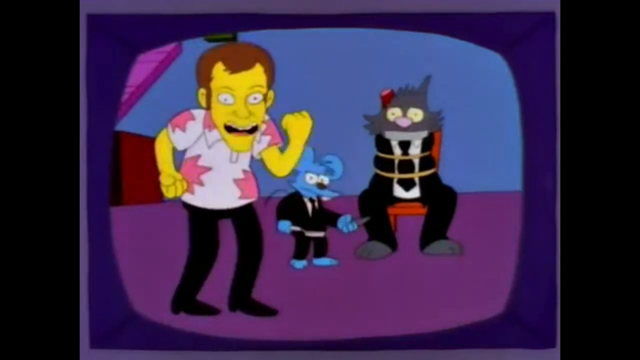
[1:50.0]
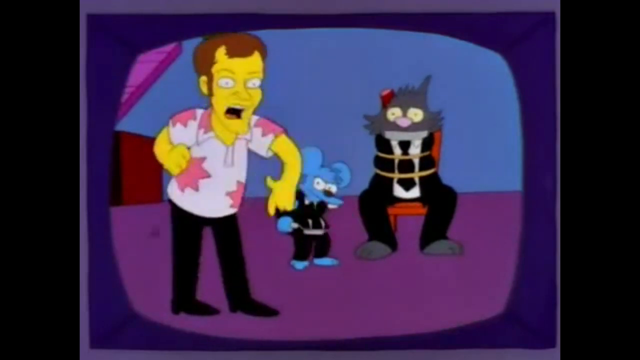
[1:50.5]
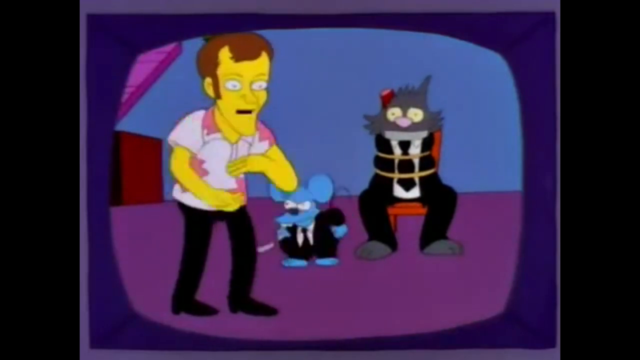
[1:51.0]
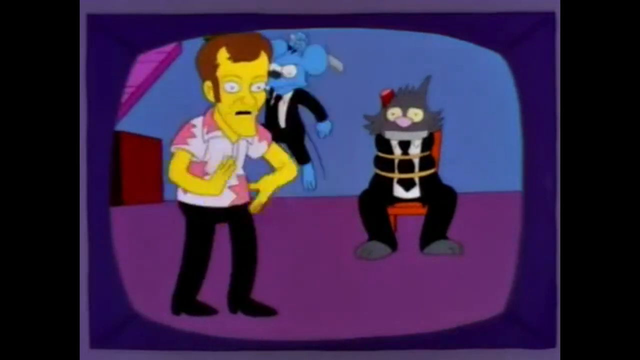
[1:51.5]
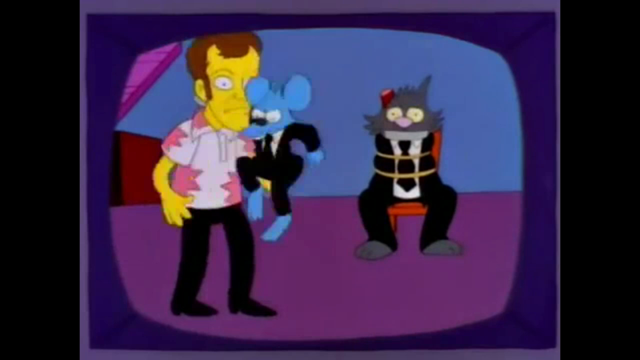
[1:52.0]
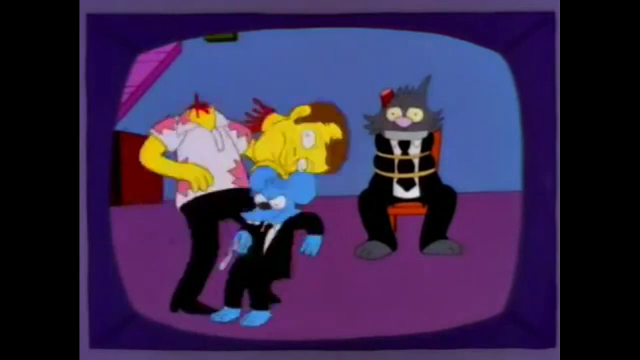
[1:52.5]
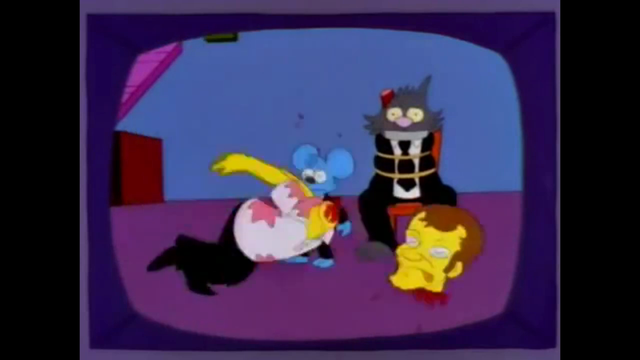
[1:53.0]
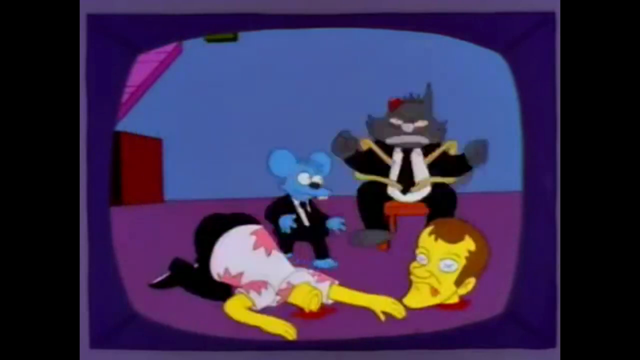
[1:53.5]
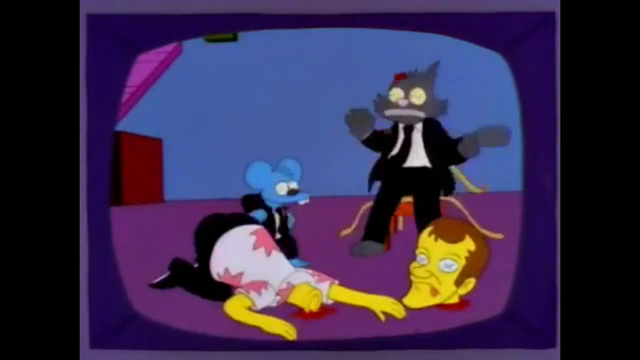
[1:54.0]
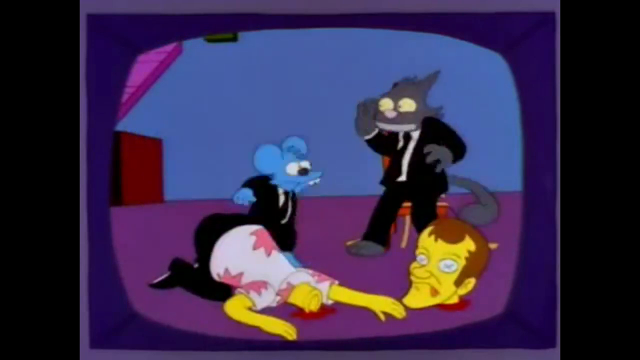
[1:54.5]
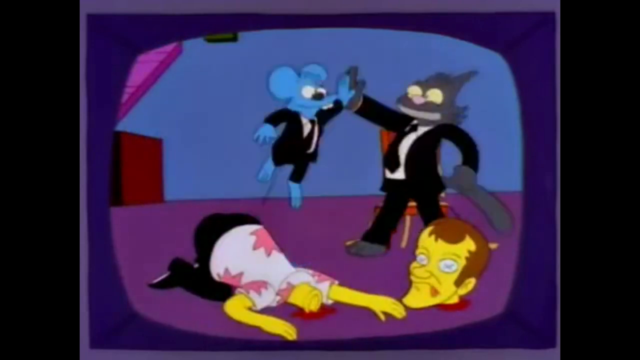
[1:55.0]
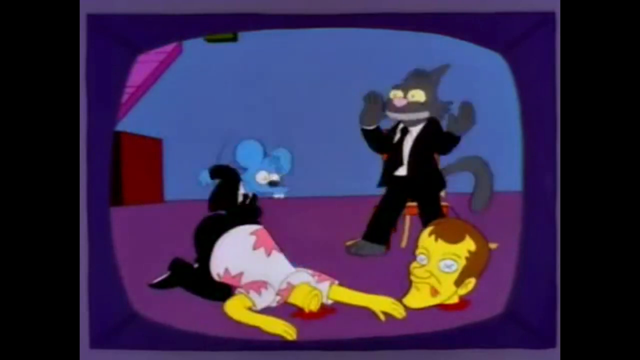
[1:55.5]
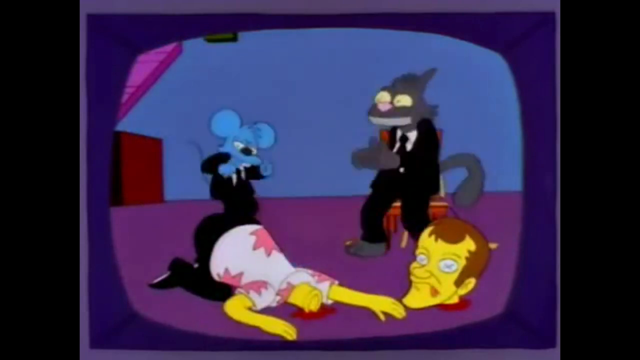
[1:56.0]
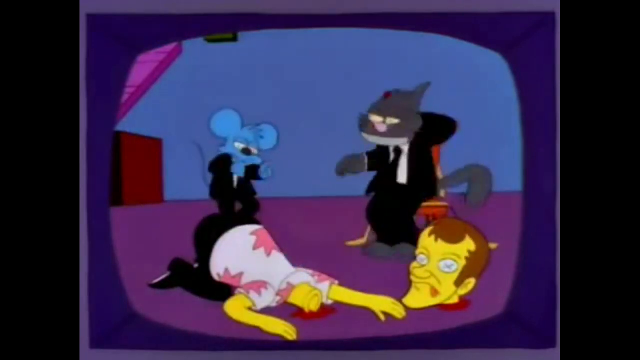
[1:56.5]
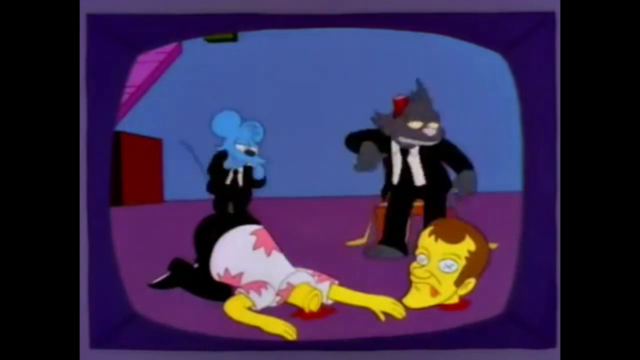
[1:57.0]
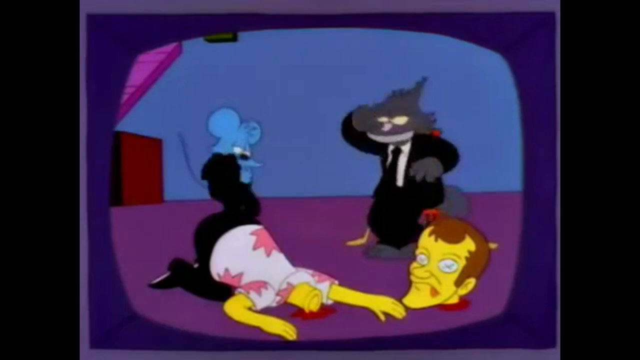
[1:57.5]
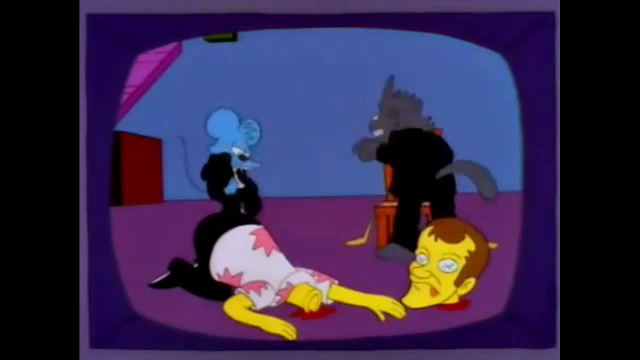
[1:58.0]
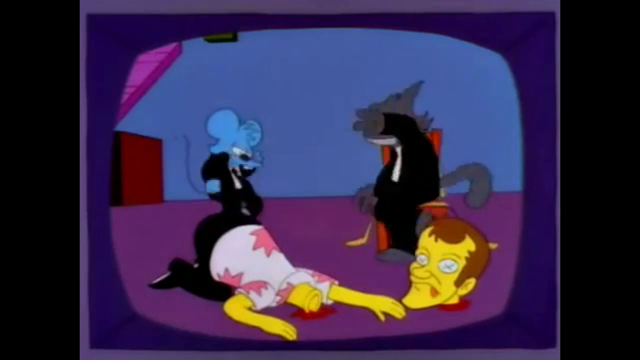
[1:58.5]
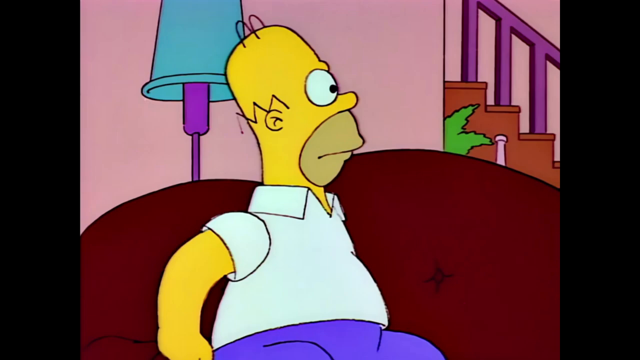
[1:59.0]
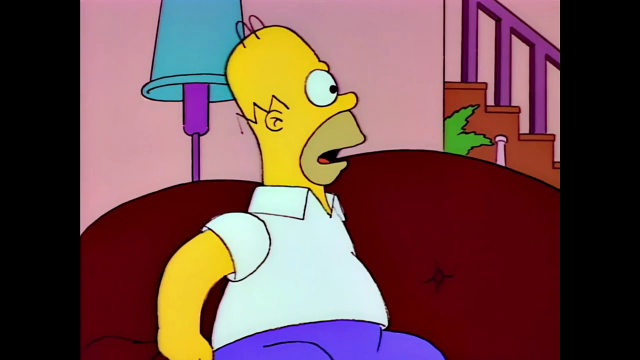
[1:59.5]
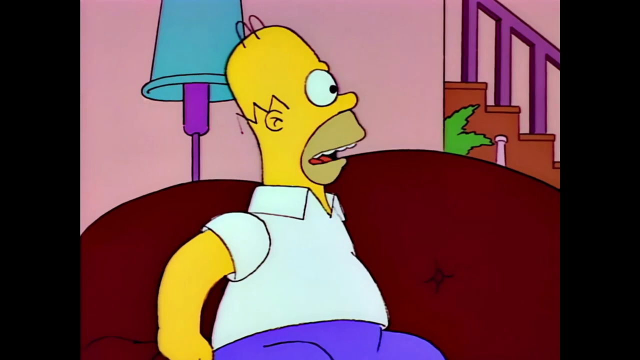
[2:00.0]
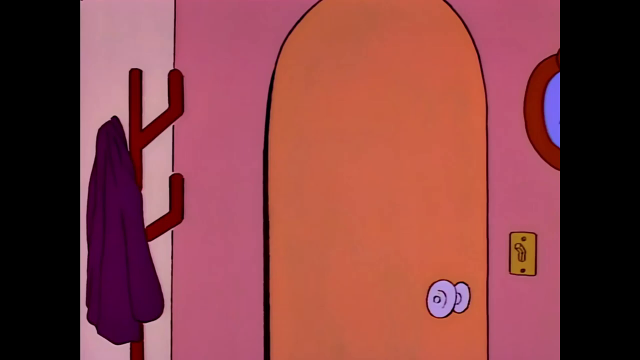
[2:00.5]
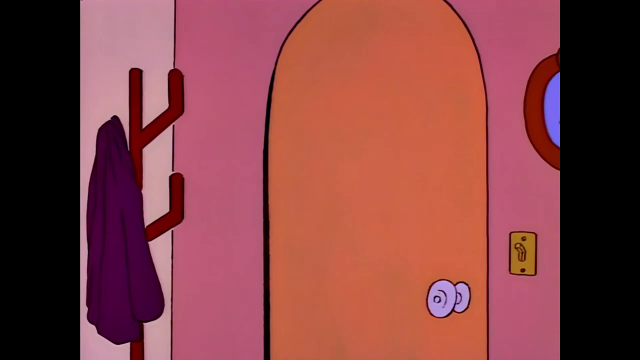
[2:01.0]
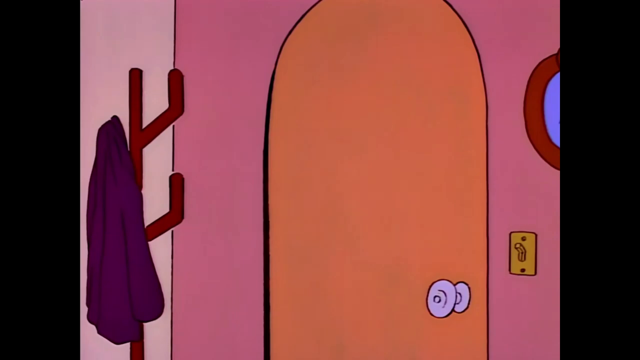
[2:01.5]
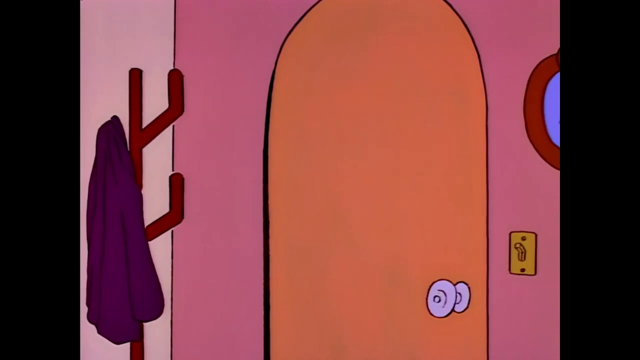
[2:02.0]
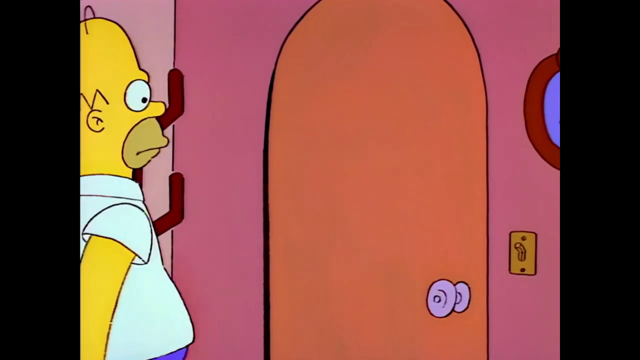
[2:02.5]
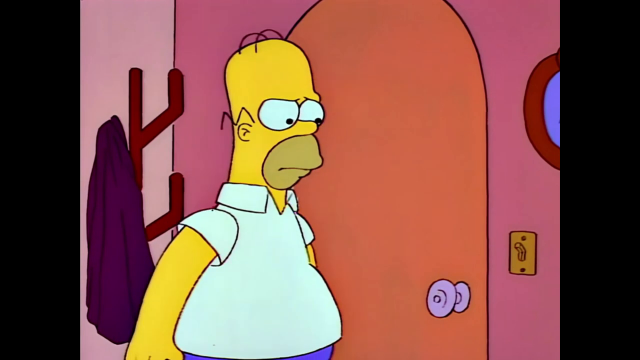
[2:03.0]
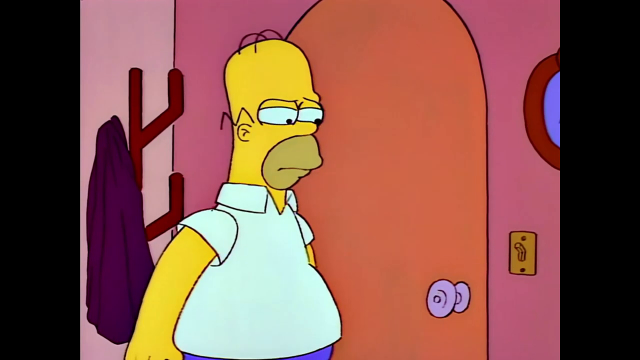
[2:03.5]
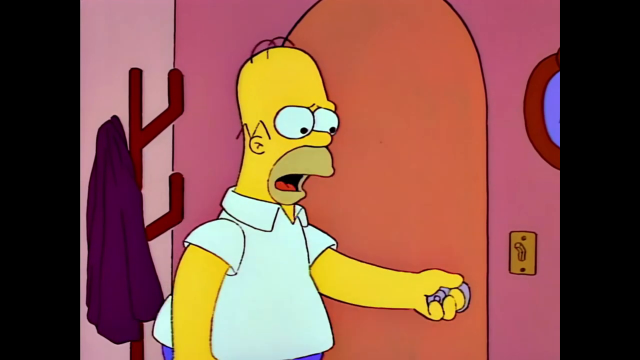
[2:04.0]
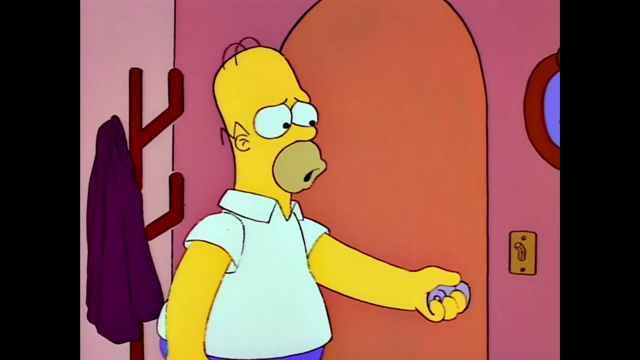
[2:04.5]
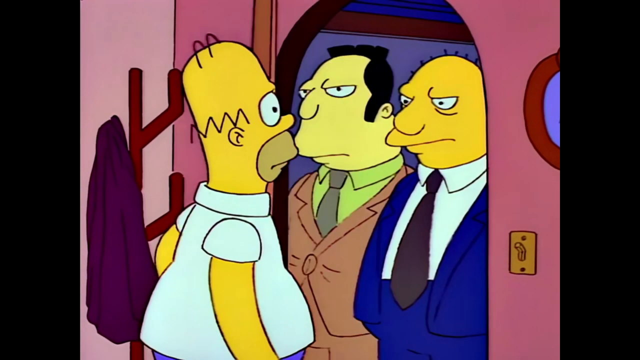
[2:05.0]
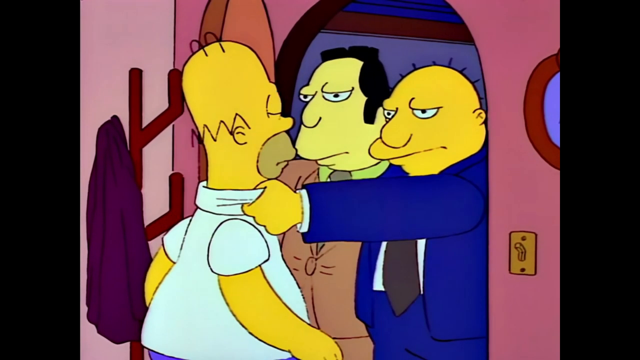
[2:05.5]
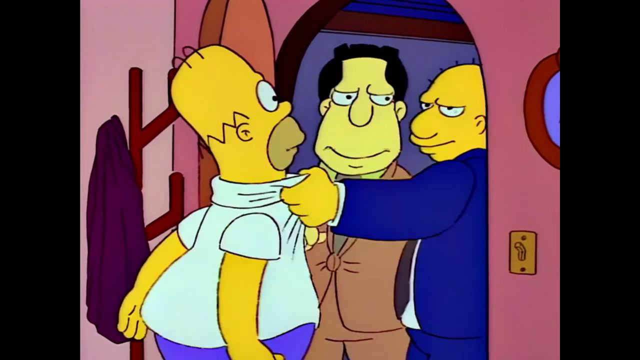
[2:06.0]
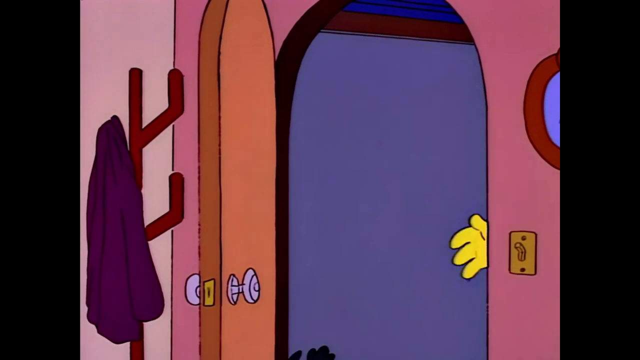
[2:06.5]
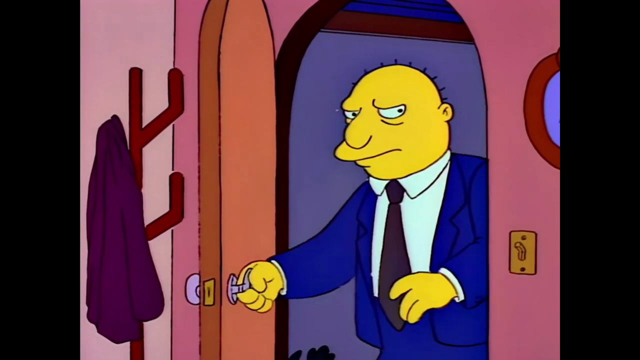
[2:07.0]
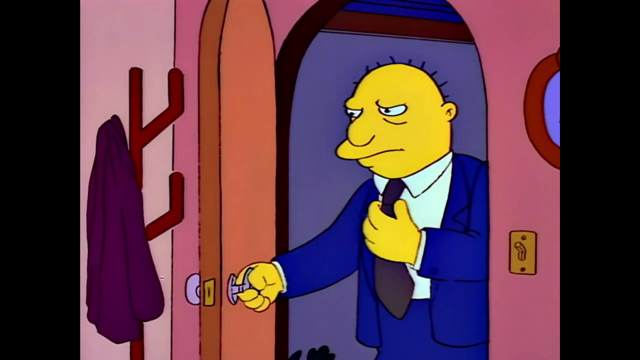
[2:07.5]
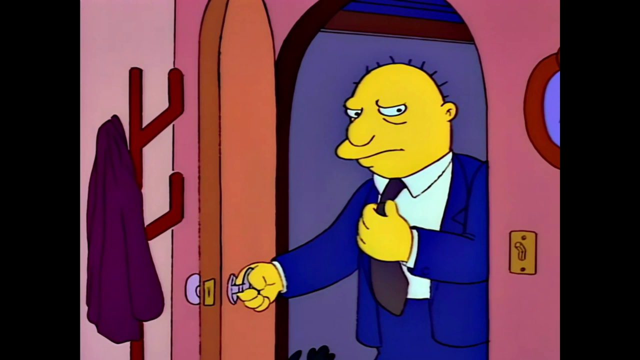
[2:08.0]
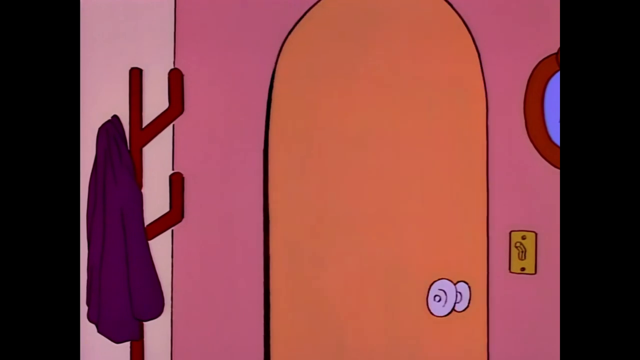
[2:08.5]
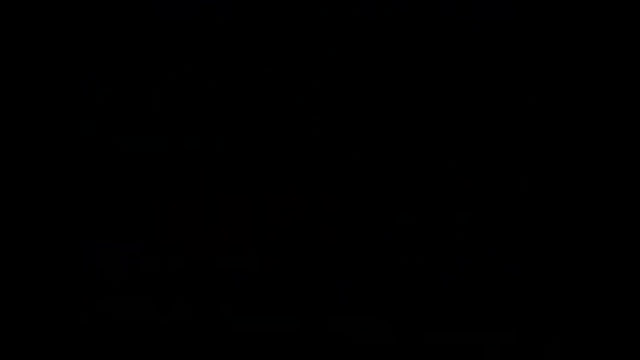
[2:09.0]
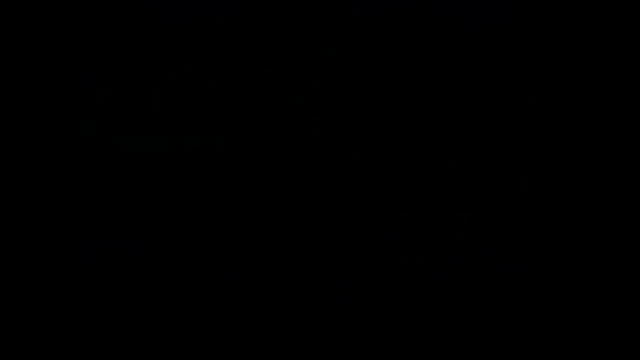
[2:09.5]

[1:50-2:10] A still shows the Quentin Tarantino-like man talking; he has a long chin, dark hair, a pink shirt with purple splotches, black pants and black shoes. The mouse, looking kind of menacing in the background, turns around with a knife, jumps up and slices the man's head off. The cat bursts free of the rope. The man's head rolls to the right side, with X's across its eyes, facing the camera, tongue hanging out, while his neck lies to the right with blood coming out. The cat leaps up and high-fives the mouse, who jumps in the air to reach him. The mouse jumps on the man's butt and starts dancing while the cat dances on the right side. The scene cuts to a close-up of Homer, still on the couch with his head turned to the right; a stairway is visible in the top right corner as he screams to someone up the stairs. The scene cuts to the door. Homer walks over, looks down at the handle, twists it and opens the door. There is a man in a brown suit and green shirt with black hair, and a balding man in a blue suit, white shirt and gray tie. The man in the blue suit reaches out, grabs Homer by the collar, and they jerk him out the door. The man in the blue suit comes back, adjusts his tie and shuts the door. The screen cuts to black.